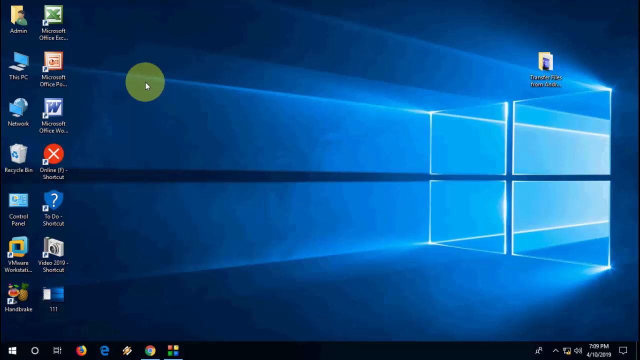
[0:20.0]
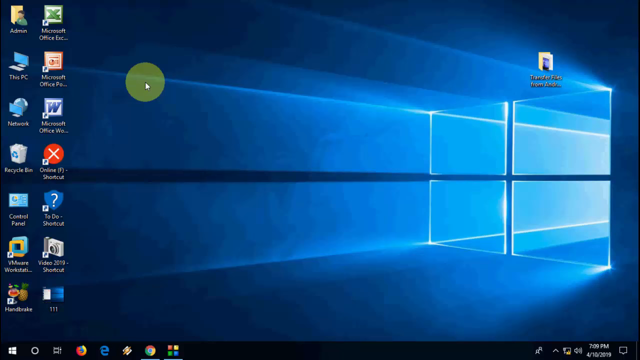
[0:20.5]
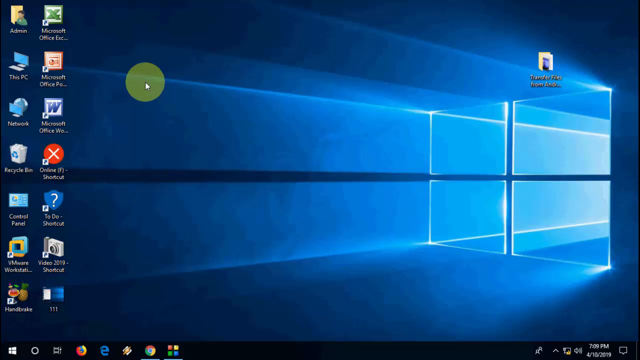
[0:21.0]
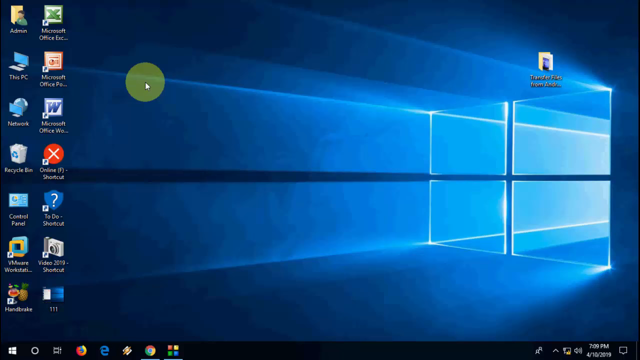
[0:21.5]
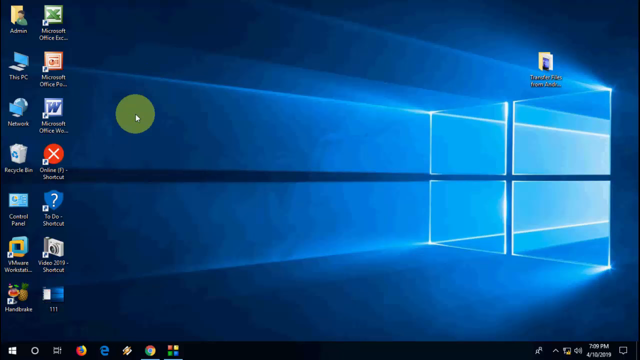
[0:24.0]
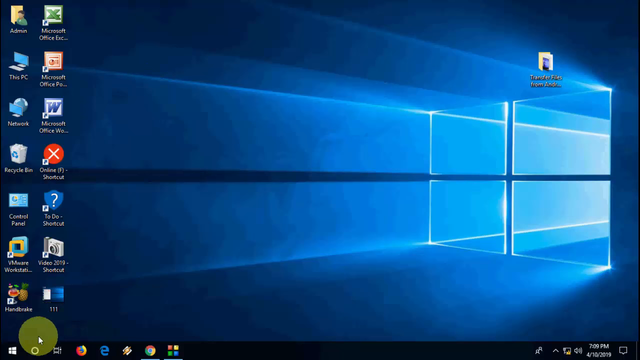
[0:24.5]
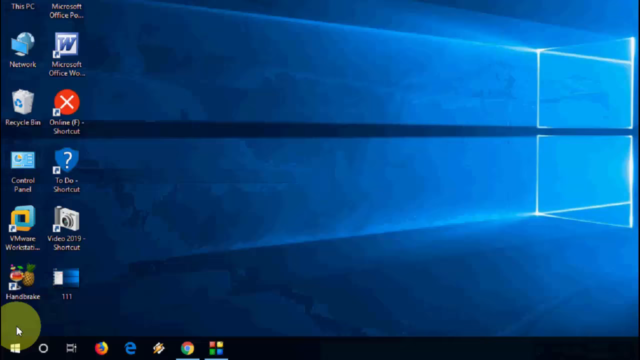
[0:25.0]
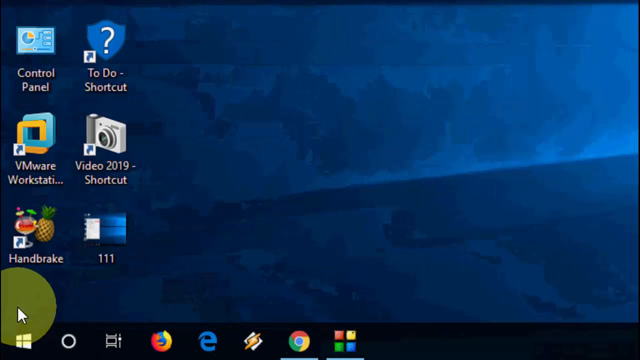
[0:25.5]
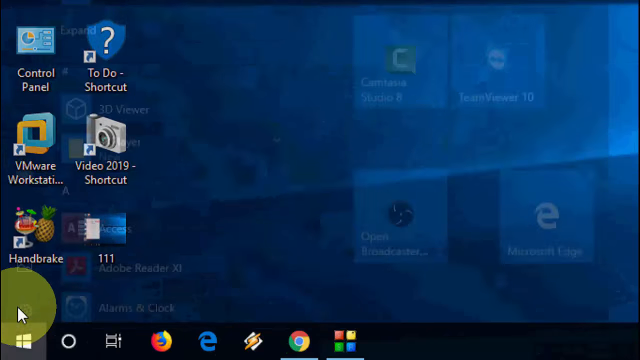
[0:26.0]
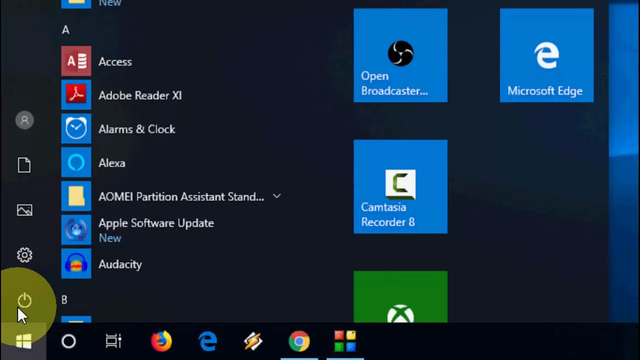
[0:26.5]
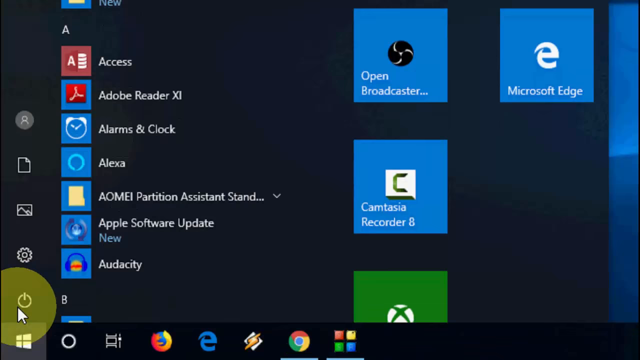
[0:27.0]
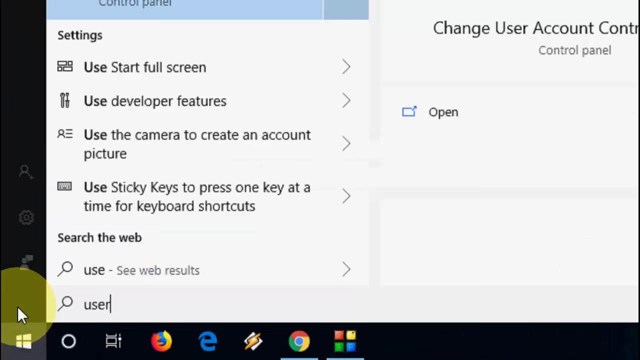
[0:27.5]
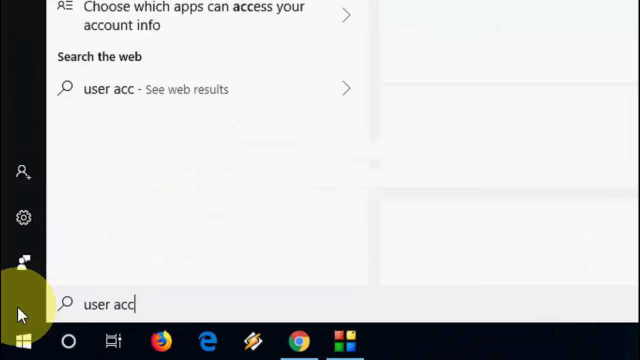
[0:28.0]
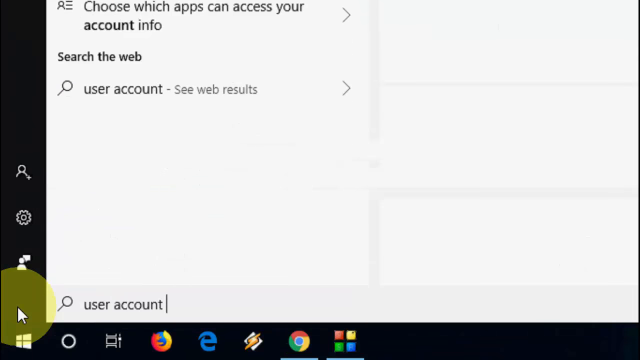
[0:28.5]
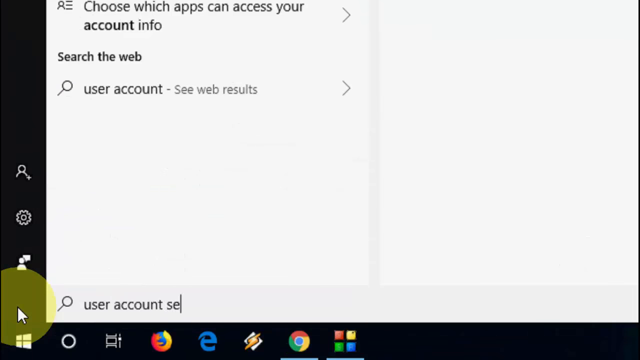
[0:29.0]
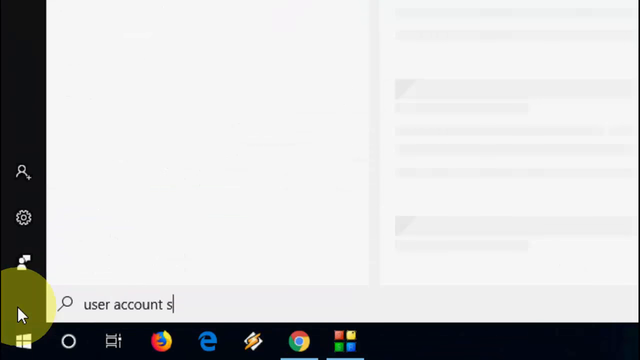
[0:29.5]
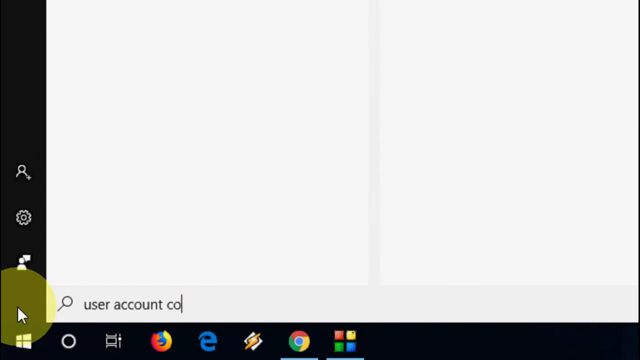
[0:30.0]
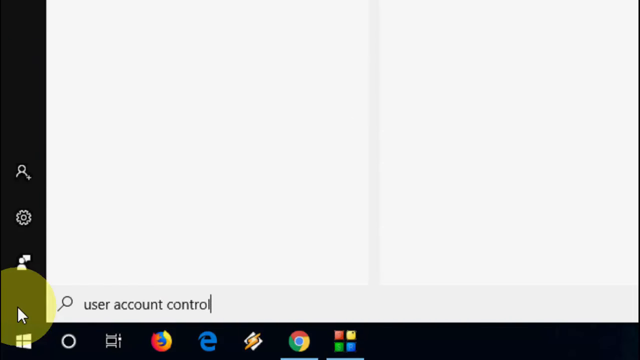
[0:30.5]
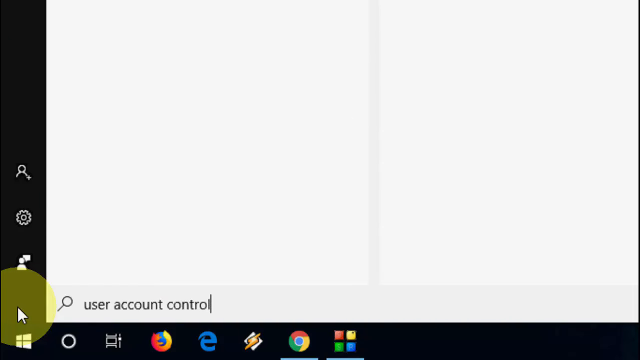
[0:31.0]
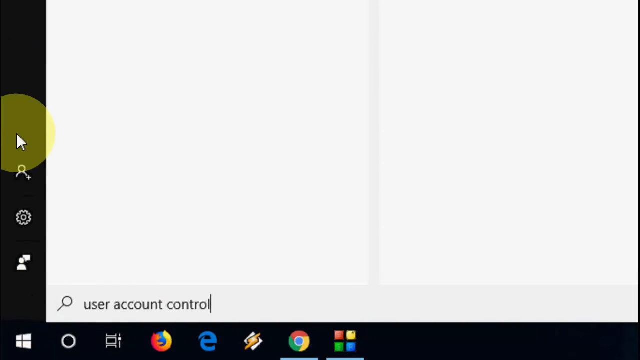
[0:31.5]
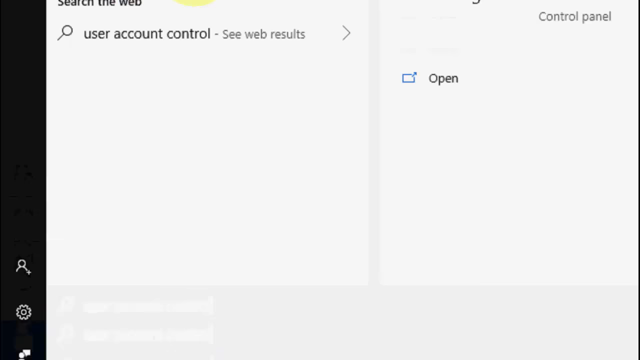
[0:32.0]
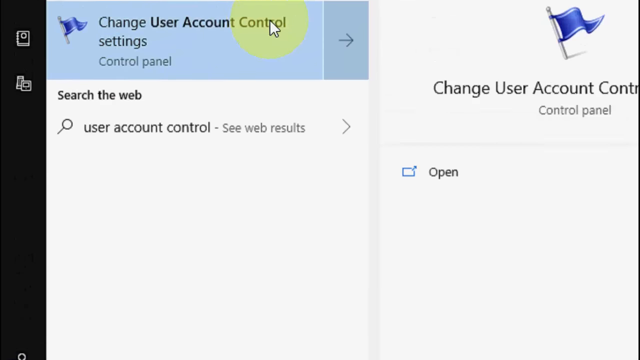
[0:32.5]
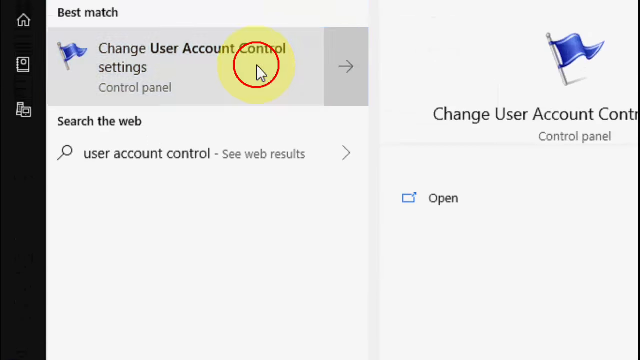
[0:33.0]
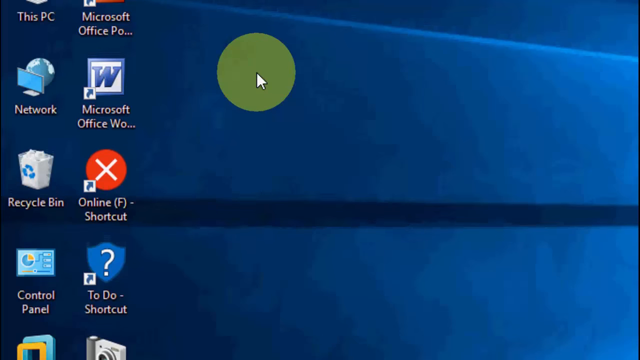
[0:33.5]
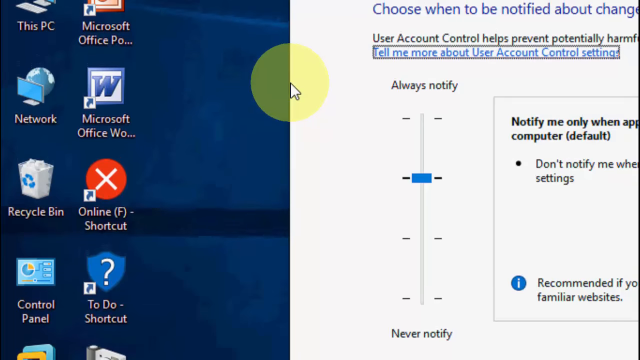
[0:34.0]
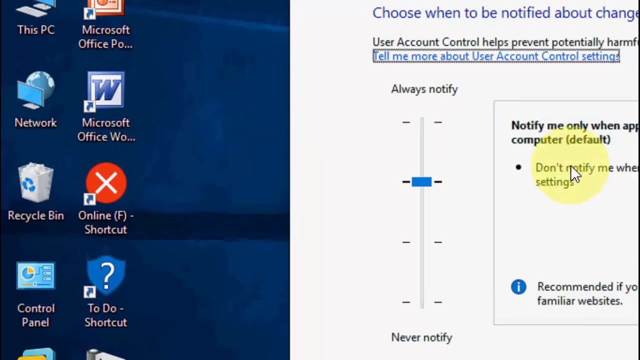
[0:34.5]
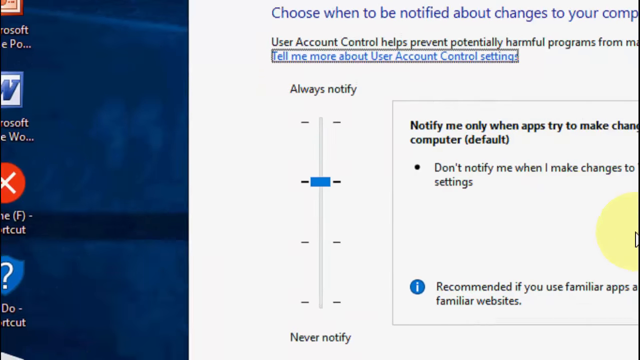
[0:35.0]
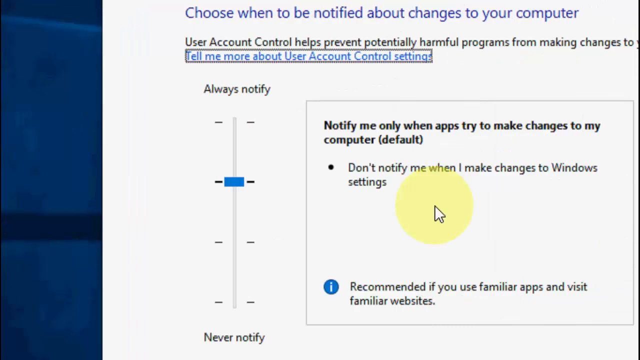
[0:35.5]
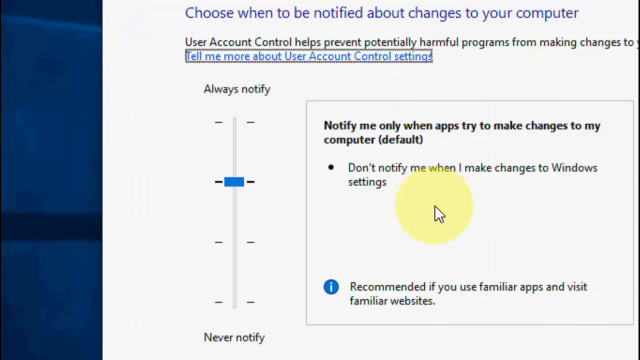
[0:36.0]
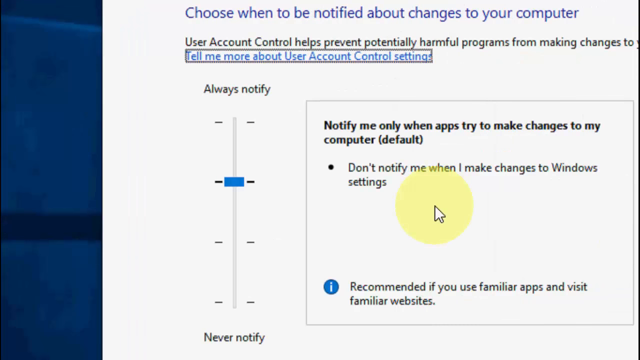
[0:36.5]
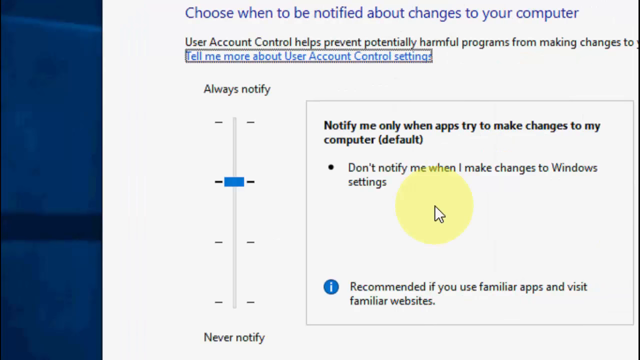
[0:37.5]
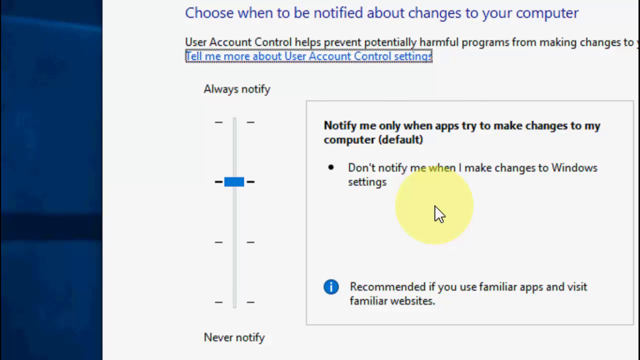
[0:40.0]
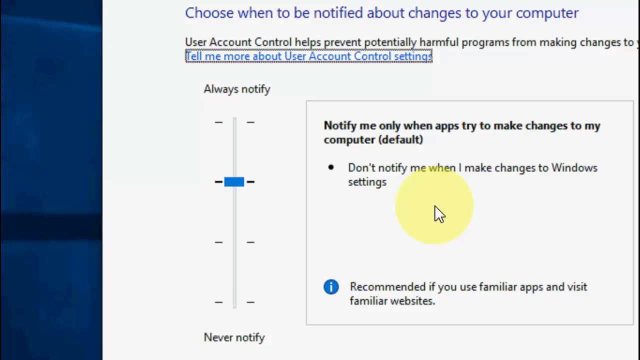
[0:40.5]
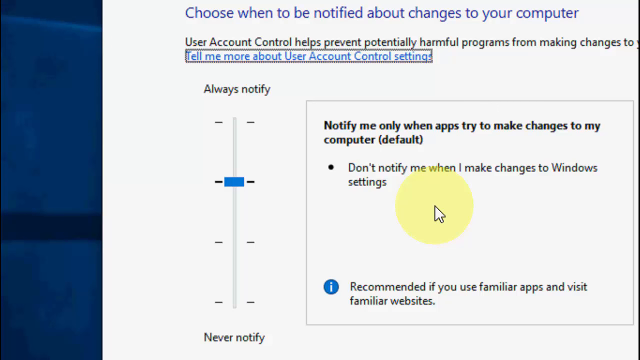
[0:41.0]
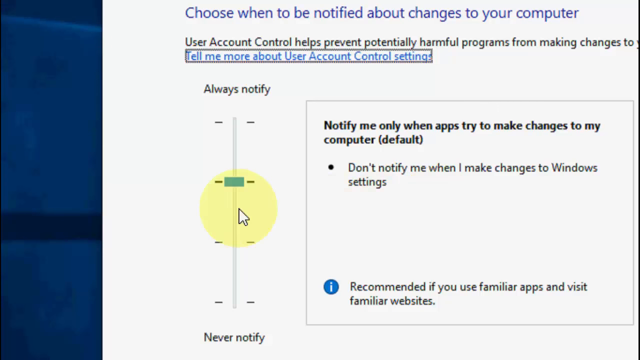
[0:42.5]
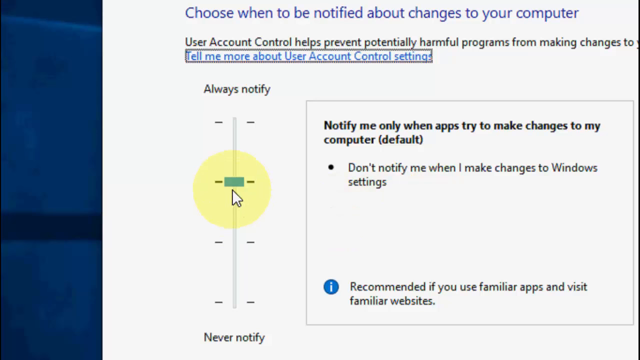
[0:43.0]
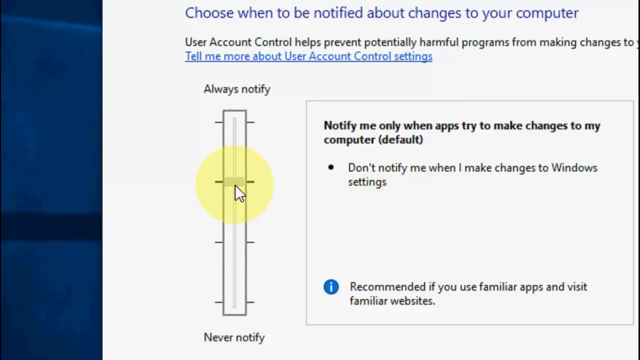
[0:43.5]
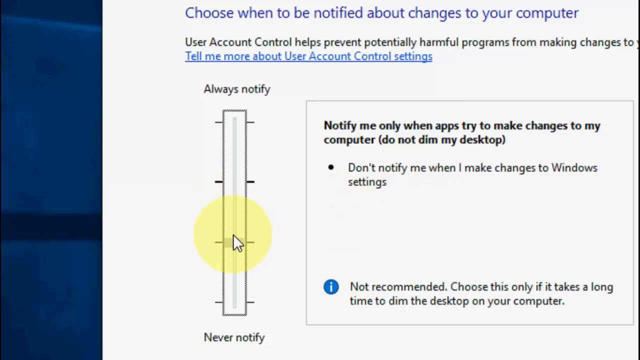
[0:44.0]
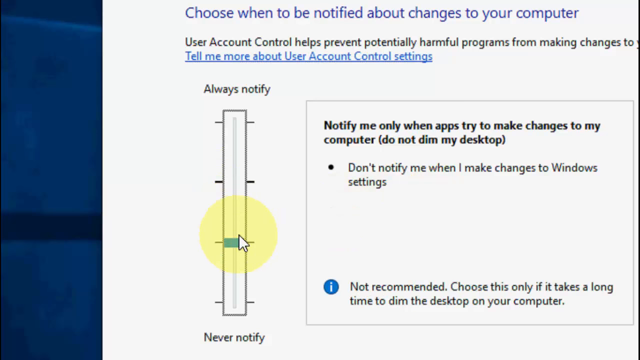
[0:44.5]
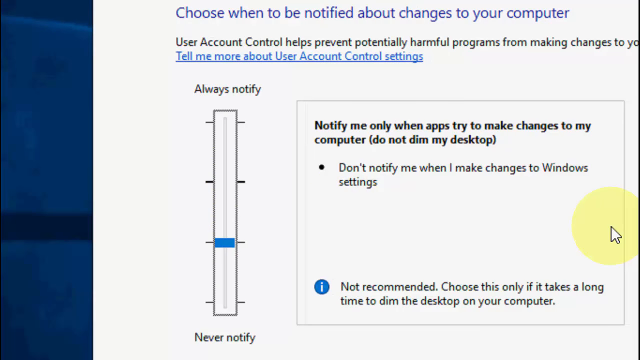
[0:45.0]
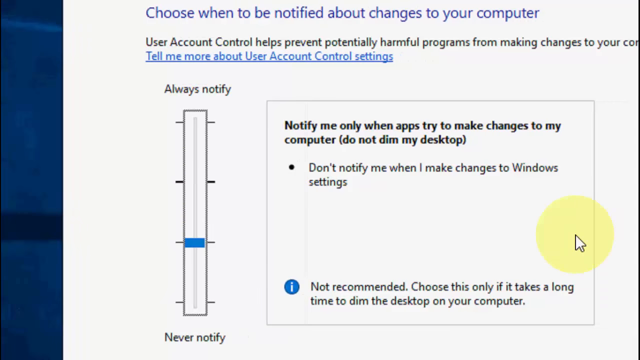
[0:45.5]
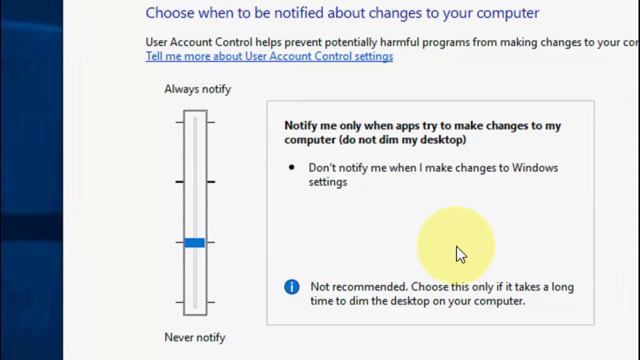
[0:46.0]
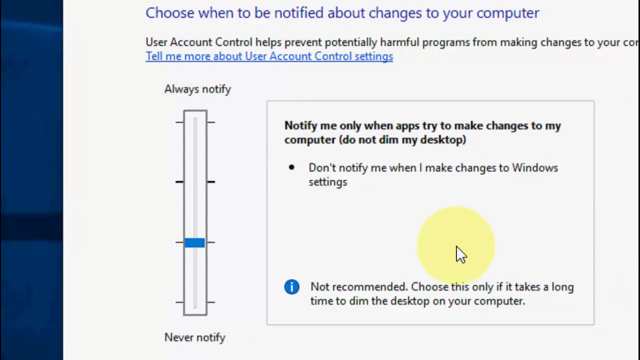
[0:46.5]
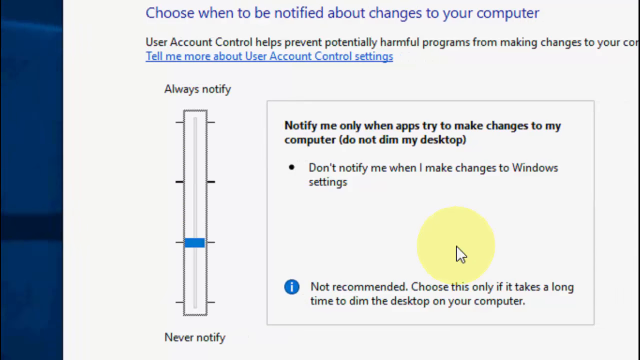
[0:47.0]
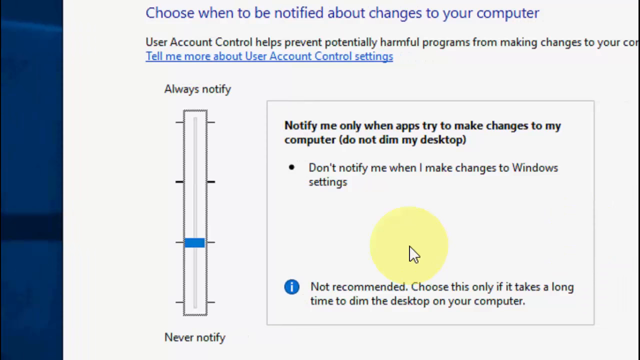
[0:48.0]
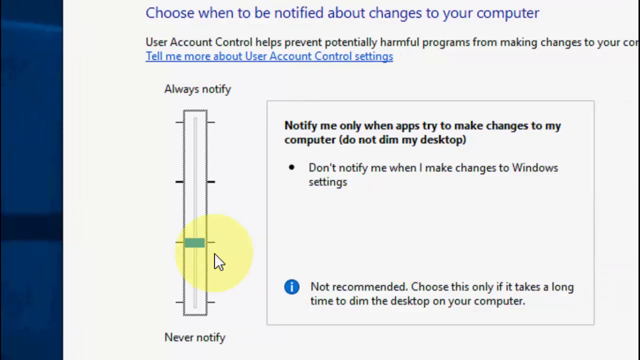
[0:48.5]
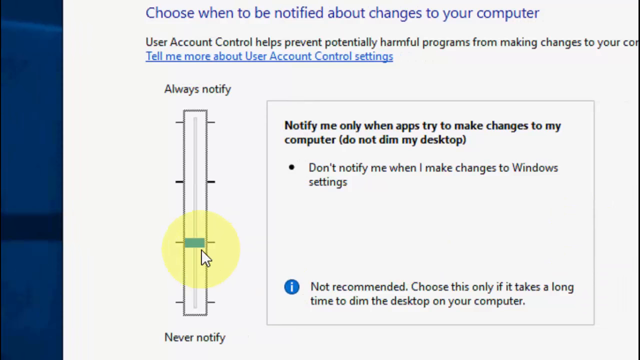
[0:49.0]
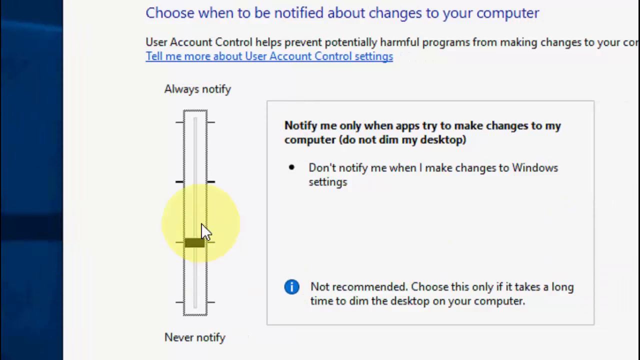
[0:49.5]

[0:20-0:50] The Windows screensaver, neon blue with four window panes, is on the desktop of a Windows PC. There are 14 shortcuts on the desktop, along with a light greenish circle with a cursor in the middle of it. The cursor moves the circle to the Windows logo at the bottom of the toolbar, which leads to user account settings, where the user clicks on control. The circle, now yellowish, is used to hover over sections in place of the cursor. The user reaches the "tell me more about the user account control settings" page, still moving the yellow circle around and clicking with it like a cursor highlighter. The video then returns to the Windows screensaver and its logo. The circle appears to be a highlighted cursor.